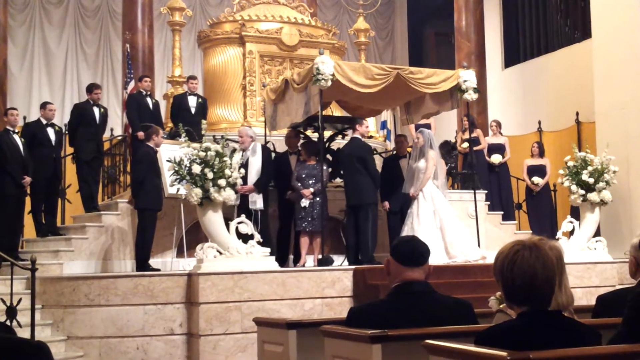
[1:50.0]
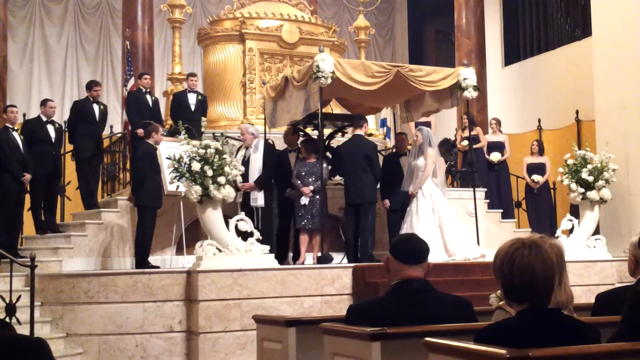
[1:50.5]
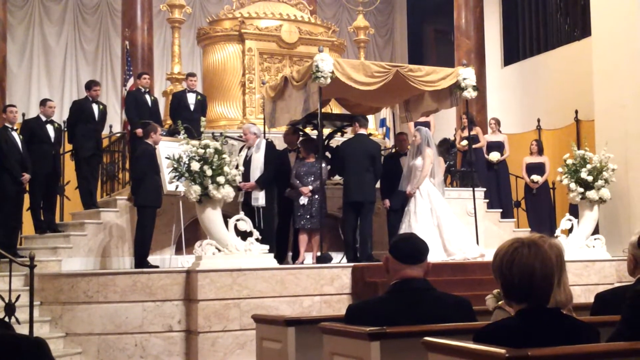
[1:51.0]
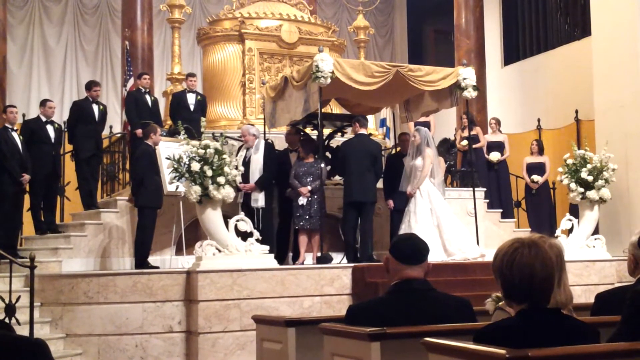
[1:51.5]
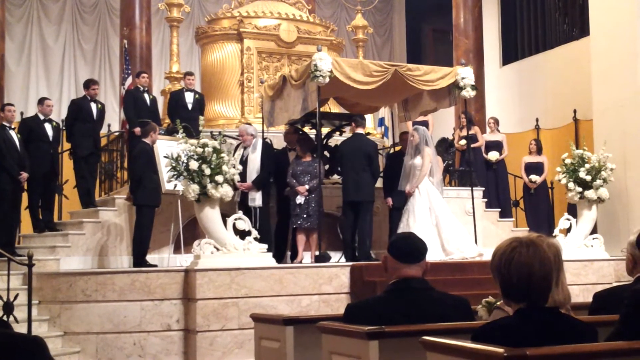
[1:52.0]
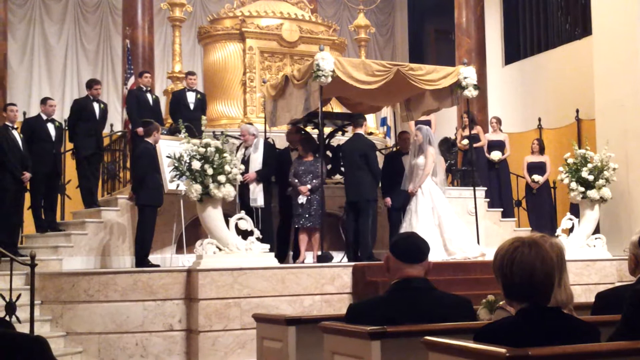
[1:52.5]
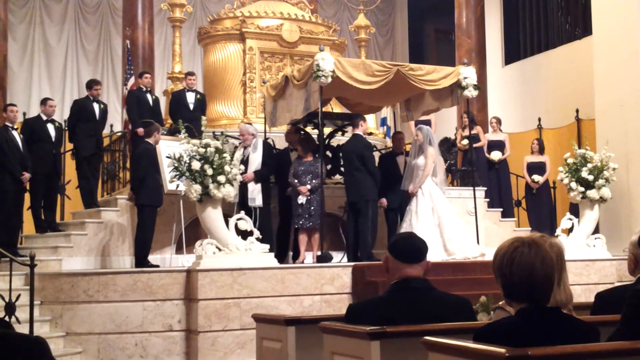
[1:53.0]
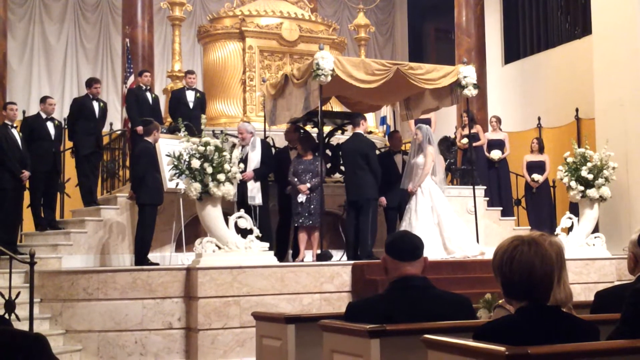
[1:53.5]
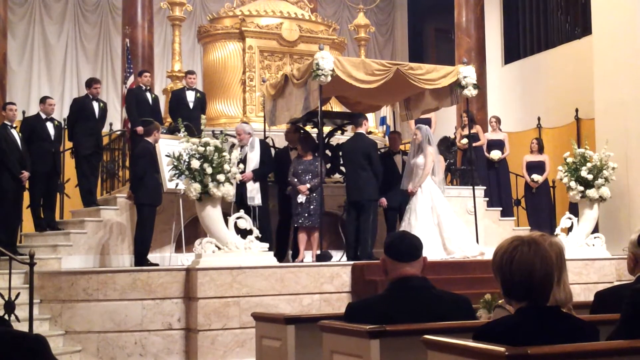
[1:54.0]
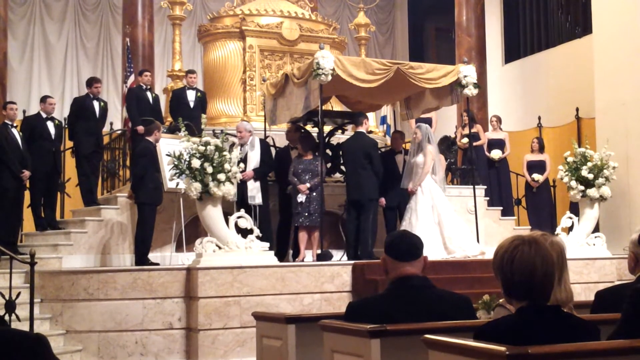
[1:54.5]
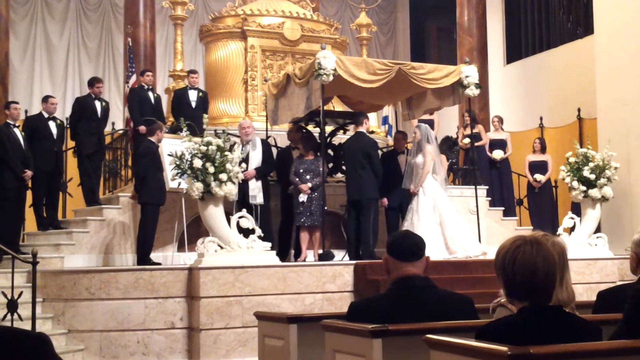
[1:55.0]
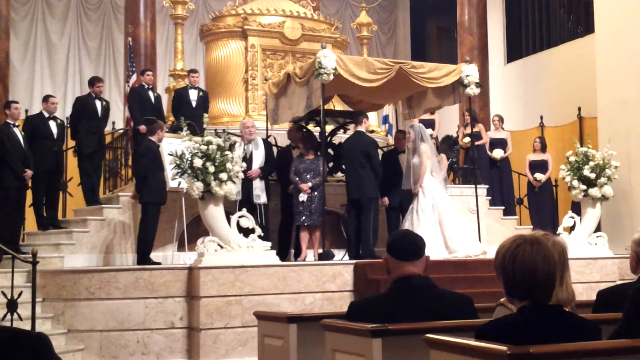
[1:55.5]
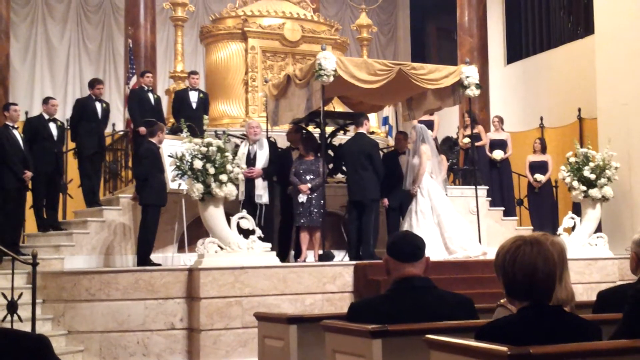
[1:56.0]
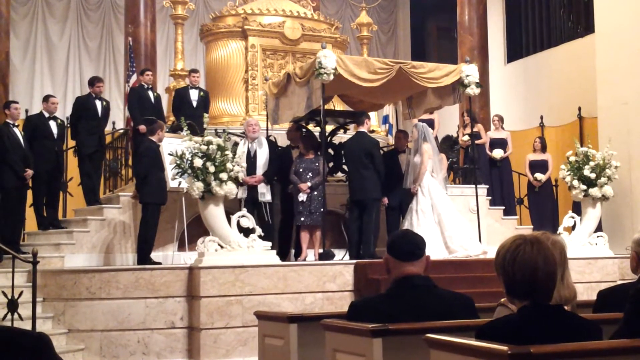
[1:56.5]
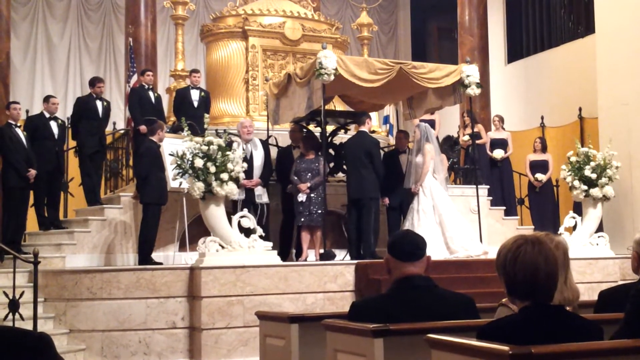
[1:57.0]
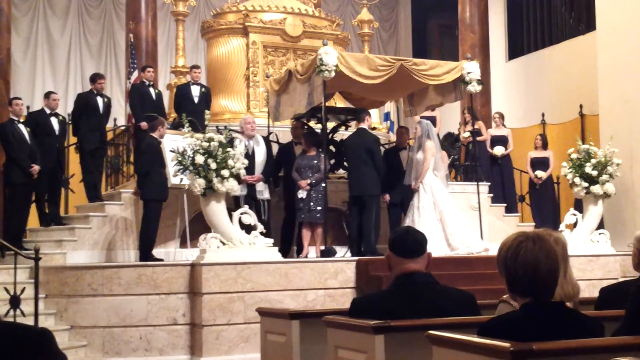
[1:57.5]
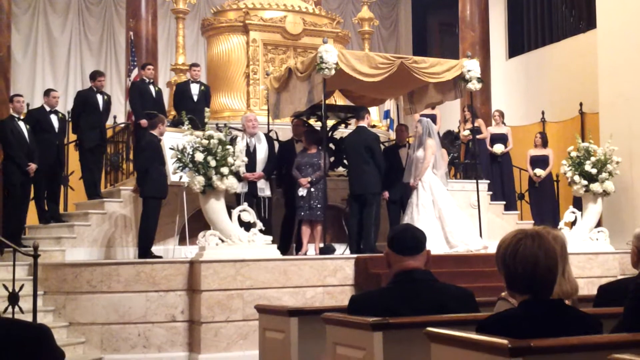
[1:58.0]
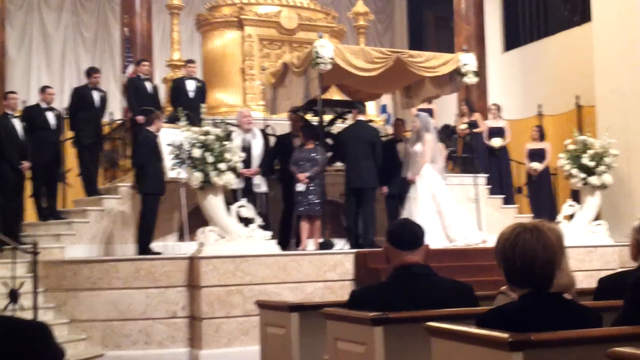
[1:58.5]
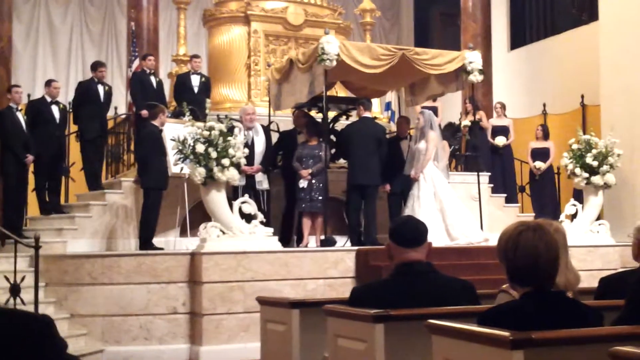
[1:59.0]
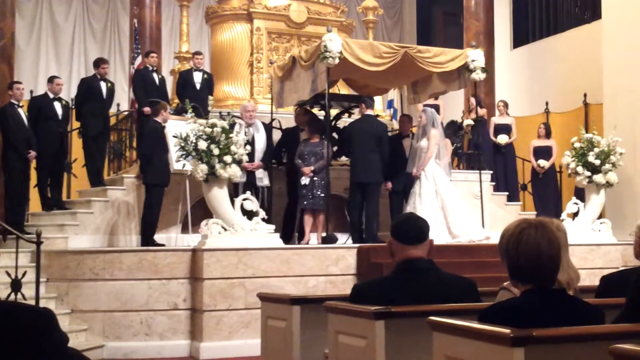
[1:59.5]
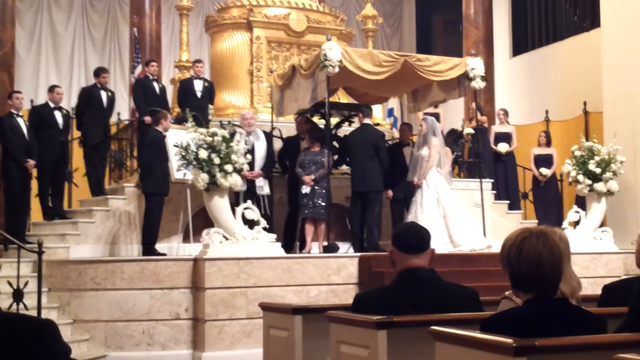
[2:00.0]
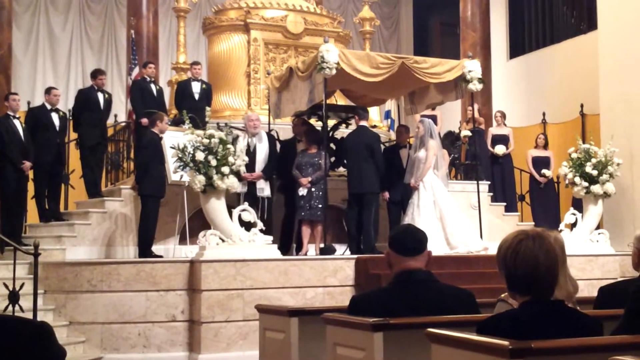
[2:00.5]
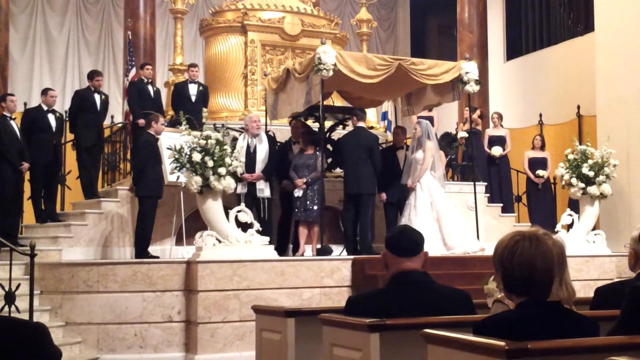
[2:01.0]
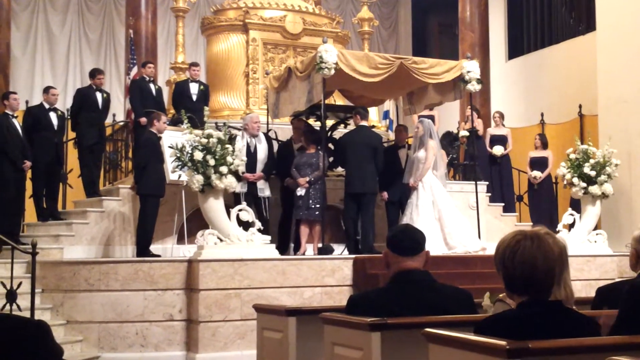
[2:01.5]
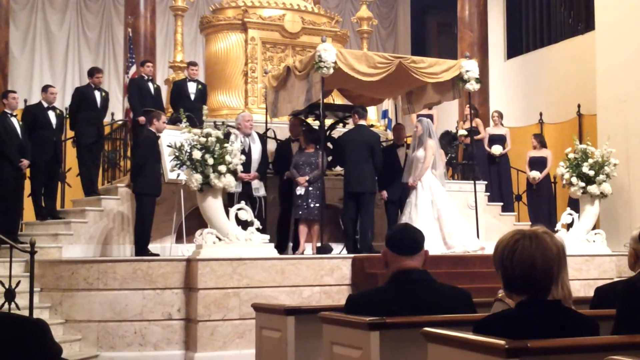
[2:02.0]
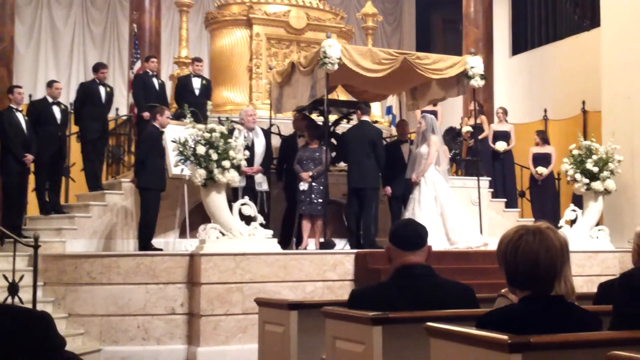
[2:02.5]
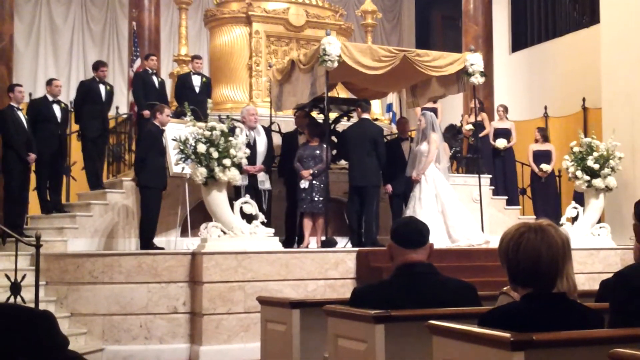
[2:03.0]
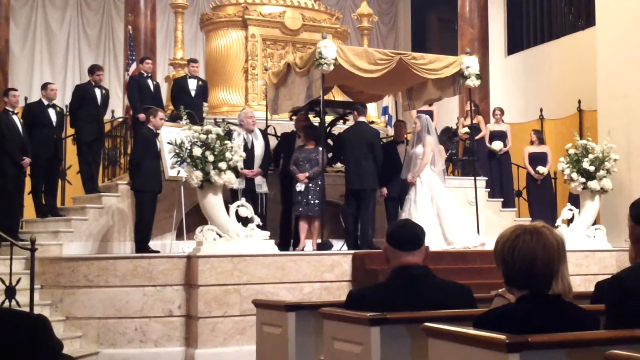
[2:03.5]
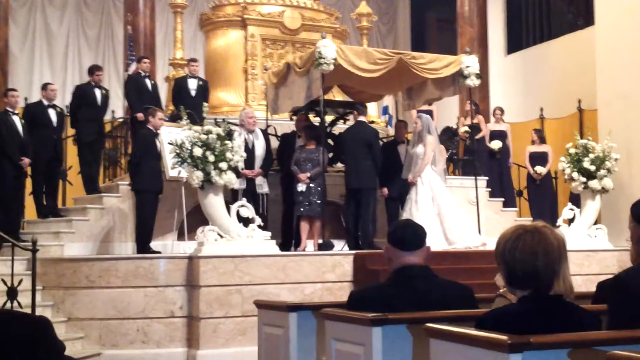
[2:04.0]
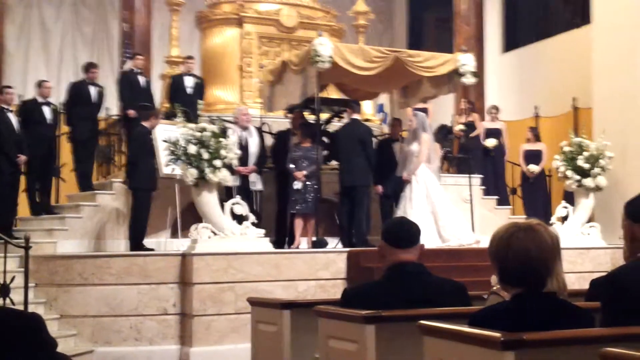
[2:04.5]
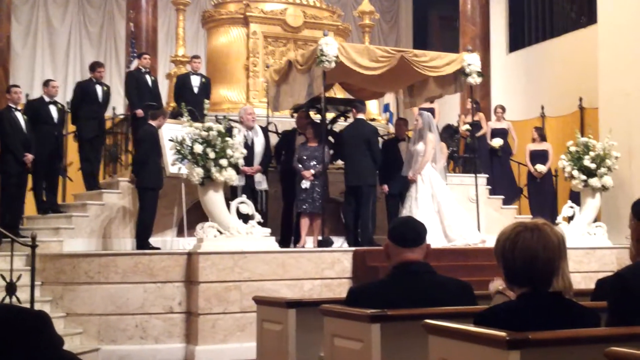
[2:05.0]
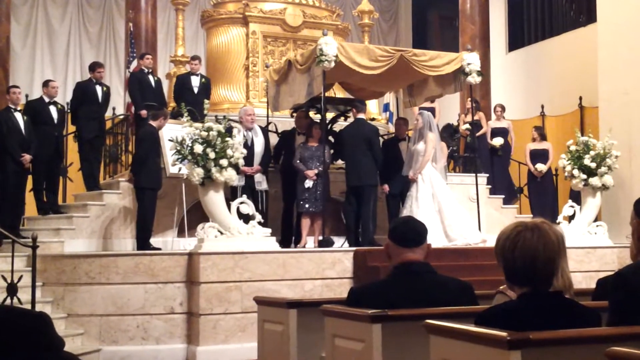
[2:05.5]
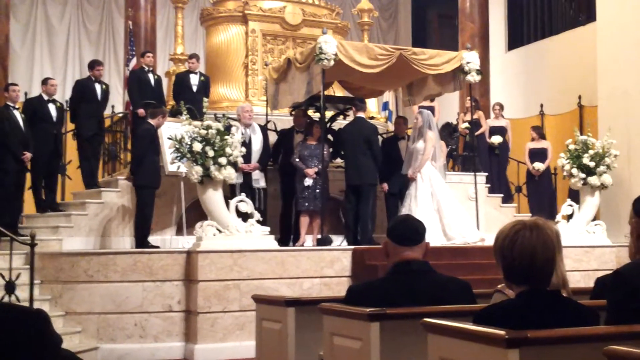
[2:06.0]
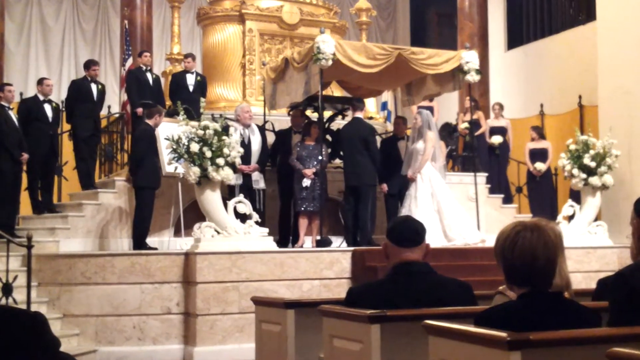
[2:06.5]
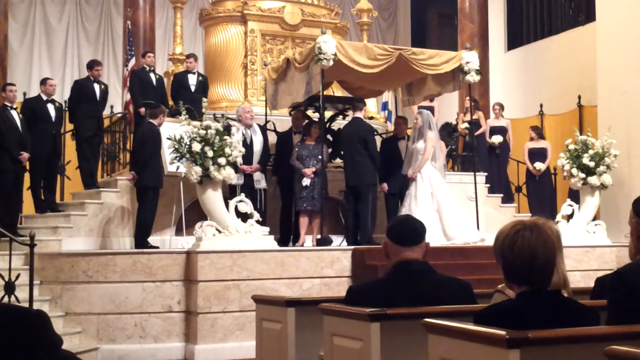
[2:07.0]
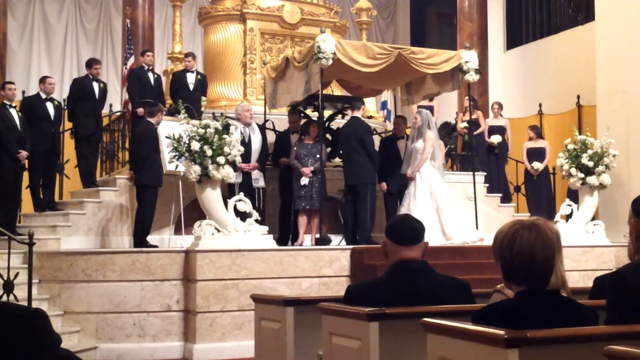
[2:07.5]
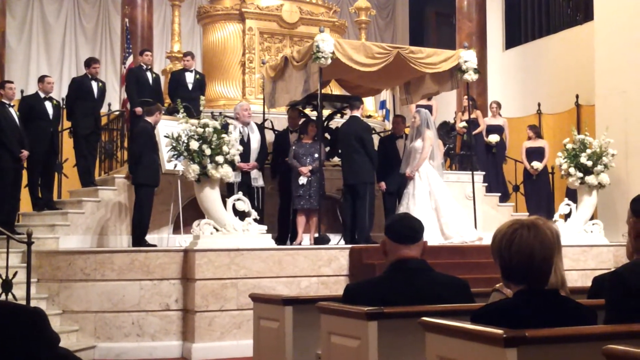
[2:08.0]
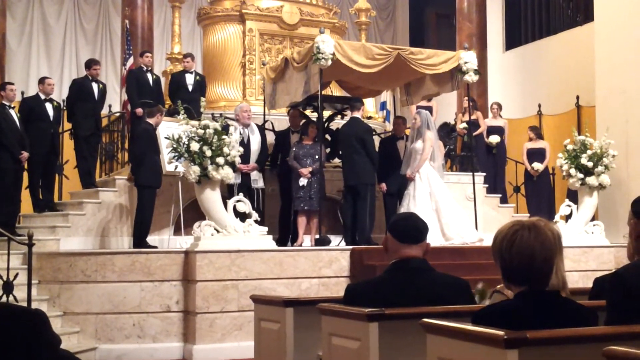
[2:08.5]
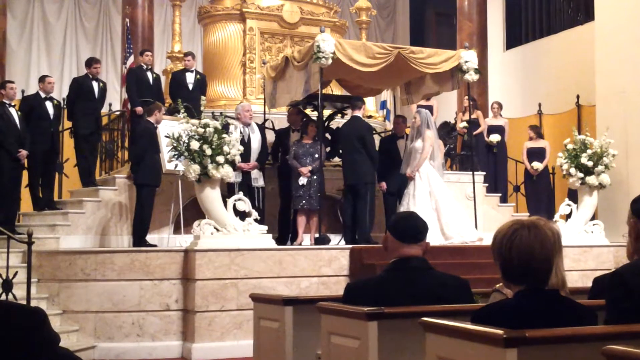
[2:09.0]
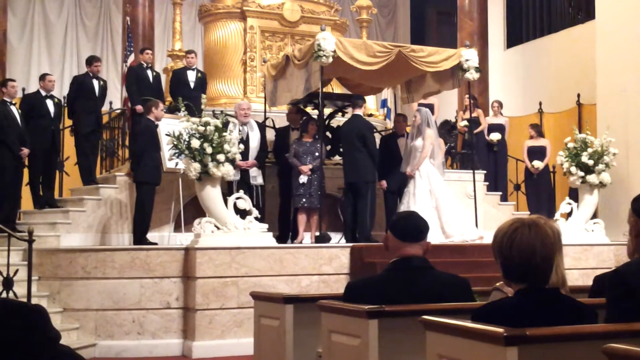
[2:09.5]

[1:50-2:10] The wedding ceremony in the church is seen from behind a few pews, with the camera angled towards the altar and a few people in the pews facing the altar. There is a red carpeted floor, with stone stairs leading up to the altar. Sets of stairs lead up and behind the altar off to the sides, with the groomsmen on the left and the bridesmaids on the right. The altar is made up of a canopy with golden fabric and two elegant vases with bouquets of flowers off to the sides. Under the canopy, the bride and groom in traditional wedding attire face each other, with a few other people, likely the witnesses to the ceremony. The minister is off to the left, out from under the canopy, speaking to one of the groomsmen, likely the best man. He then turns and speaks to the crowd and the bride and groom.